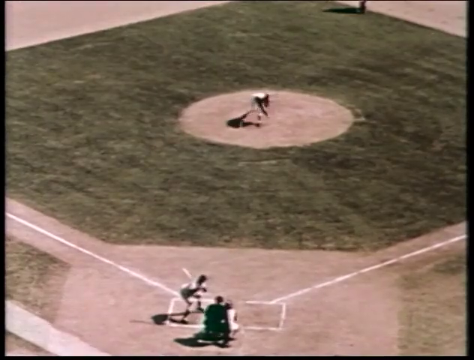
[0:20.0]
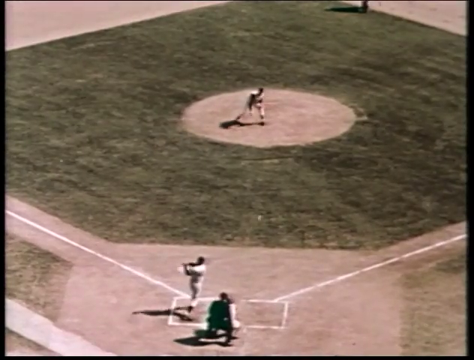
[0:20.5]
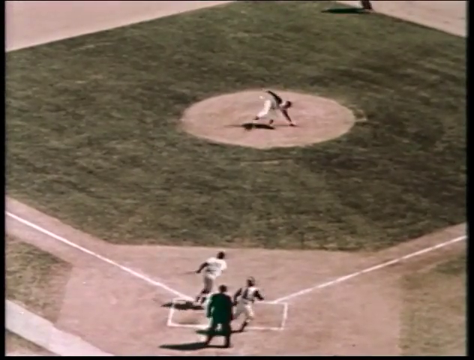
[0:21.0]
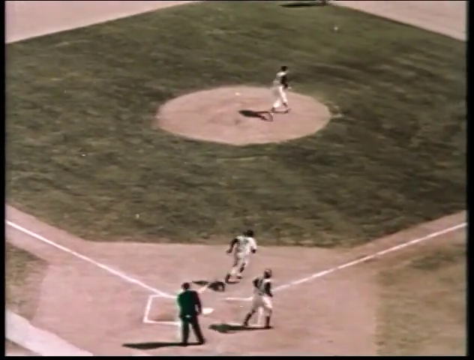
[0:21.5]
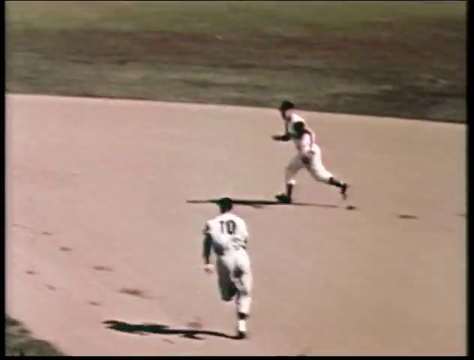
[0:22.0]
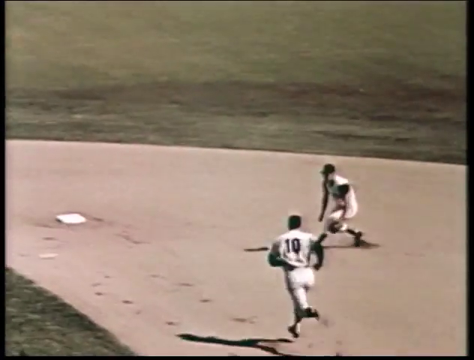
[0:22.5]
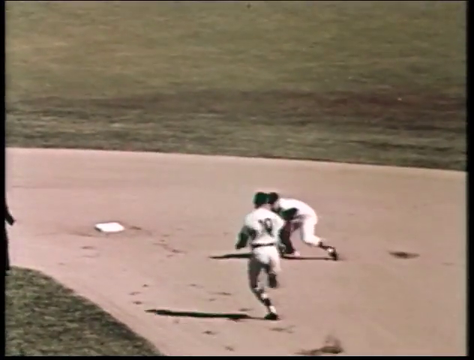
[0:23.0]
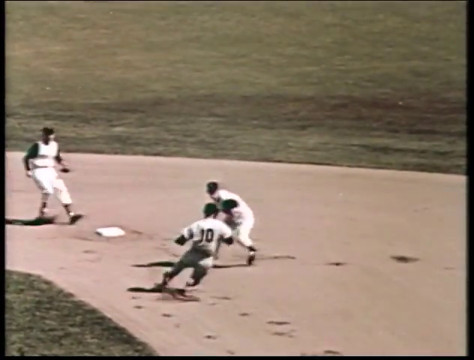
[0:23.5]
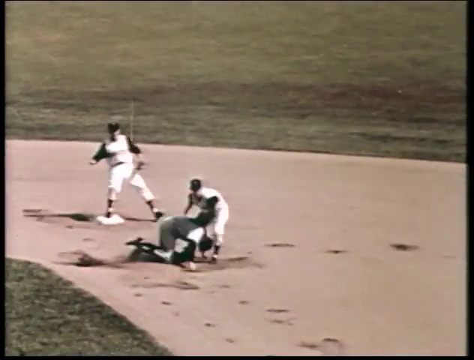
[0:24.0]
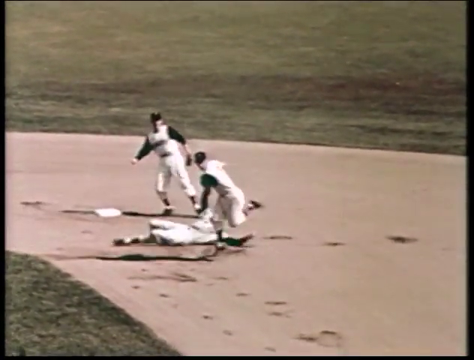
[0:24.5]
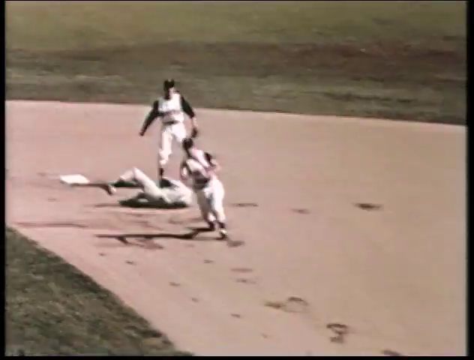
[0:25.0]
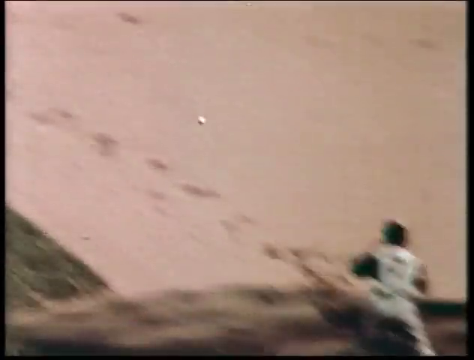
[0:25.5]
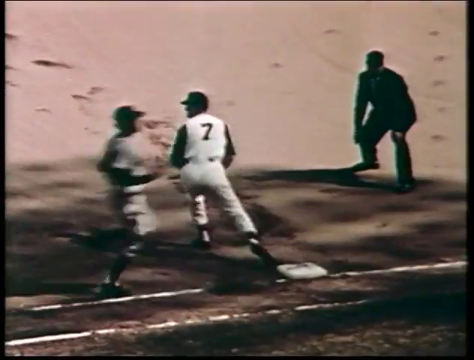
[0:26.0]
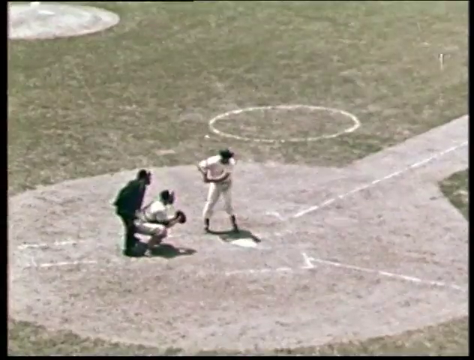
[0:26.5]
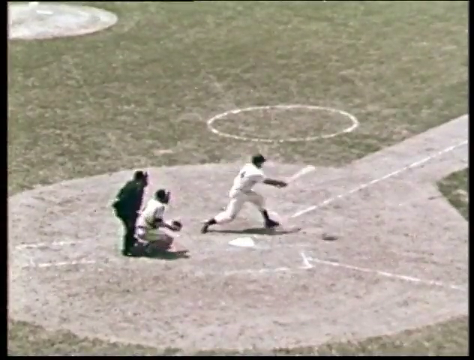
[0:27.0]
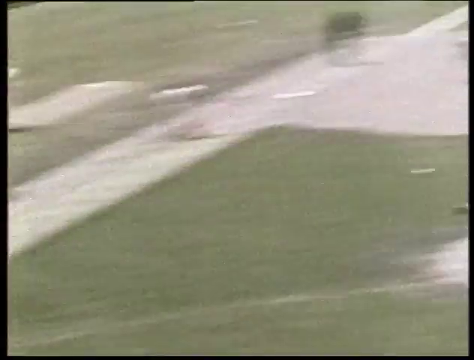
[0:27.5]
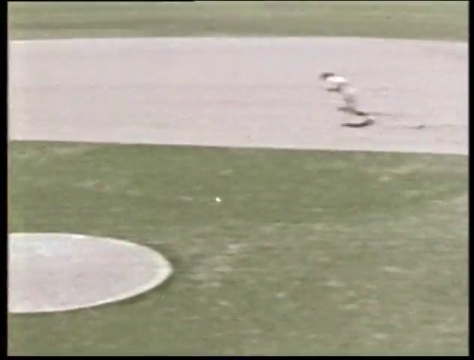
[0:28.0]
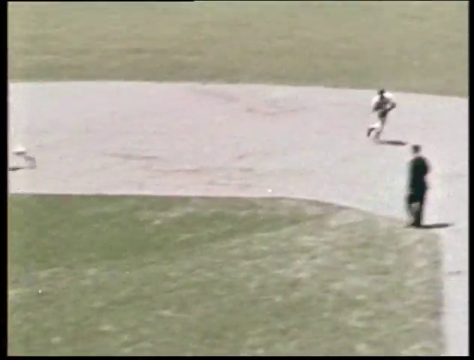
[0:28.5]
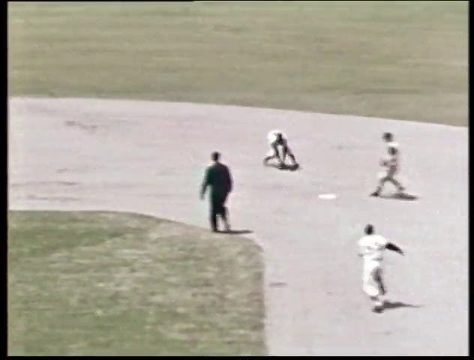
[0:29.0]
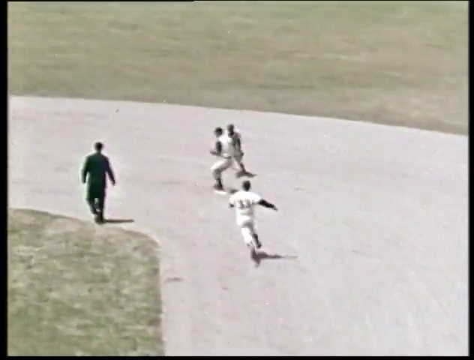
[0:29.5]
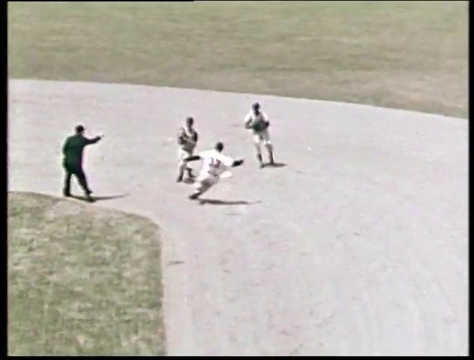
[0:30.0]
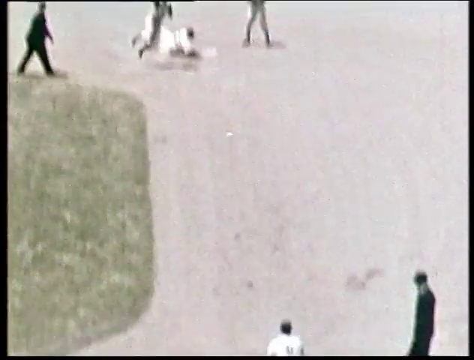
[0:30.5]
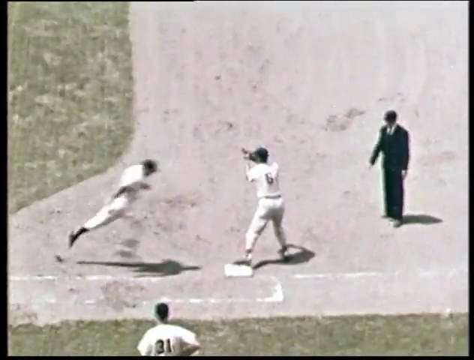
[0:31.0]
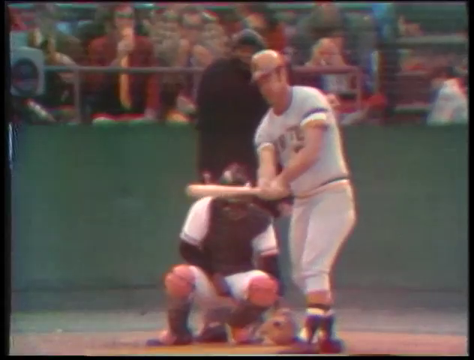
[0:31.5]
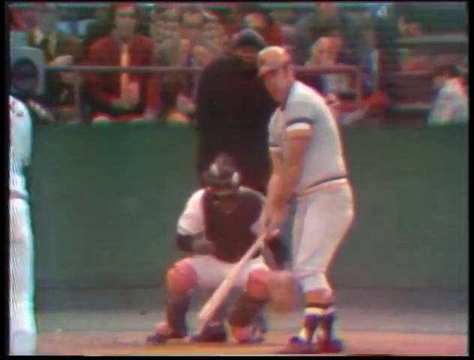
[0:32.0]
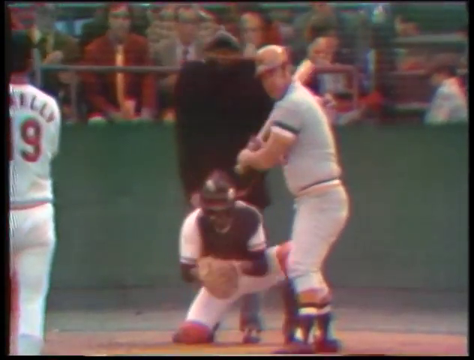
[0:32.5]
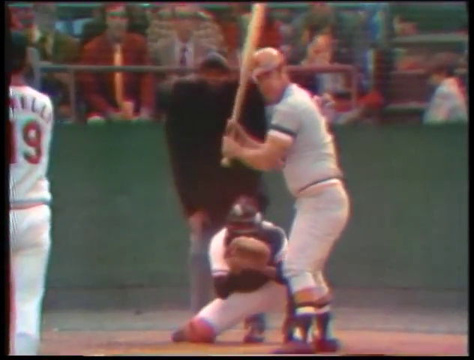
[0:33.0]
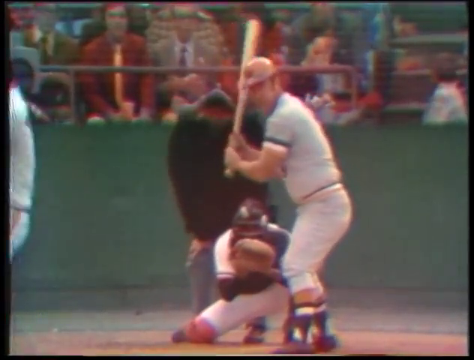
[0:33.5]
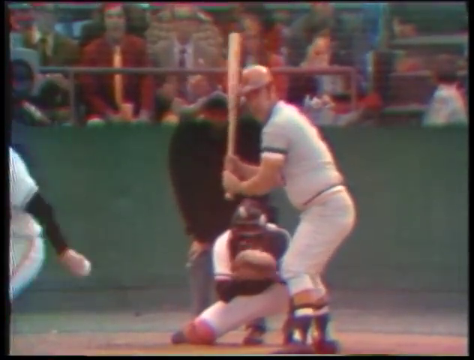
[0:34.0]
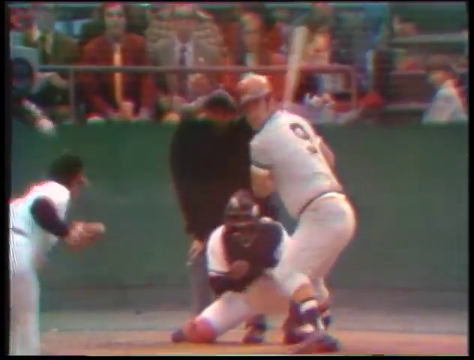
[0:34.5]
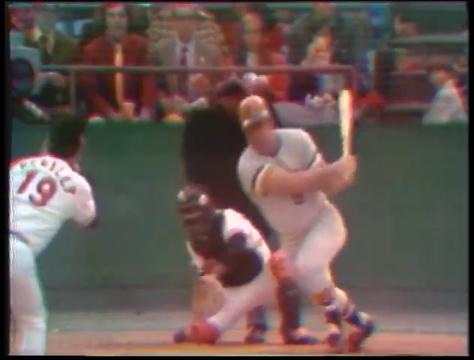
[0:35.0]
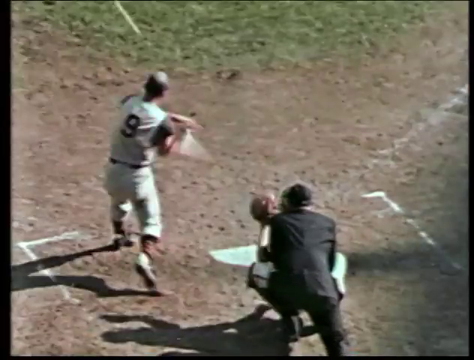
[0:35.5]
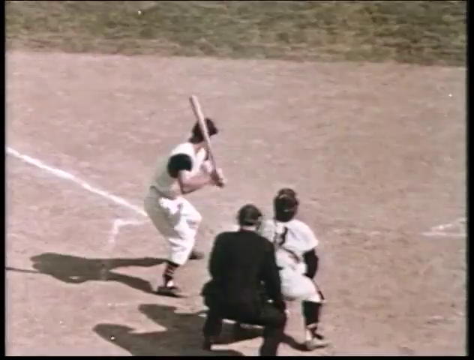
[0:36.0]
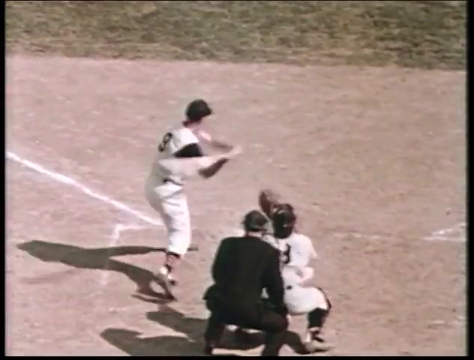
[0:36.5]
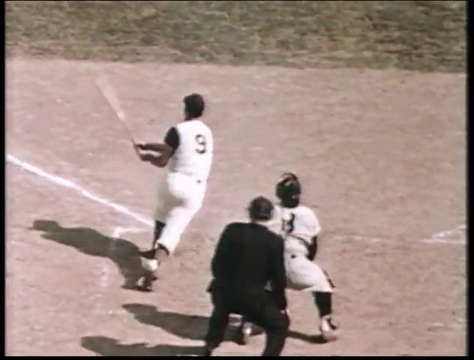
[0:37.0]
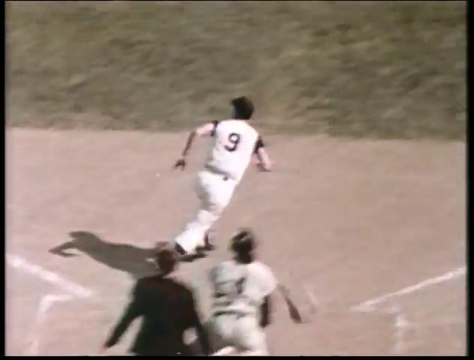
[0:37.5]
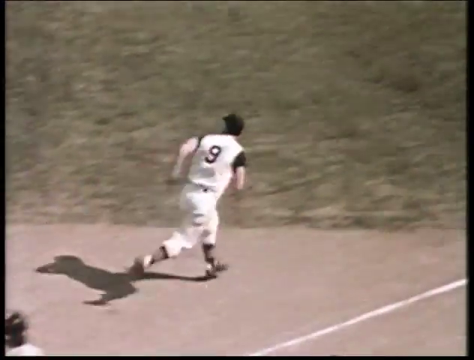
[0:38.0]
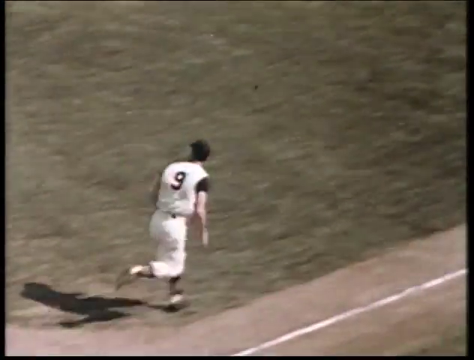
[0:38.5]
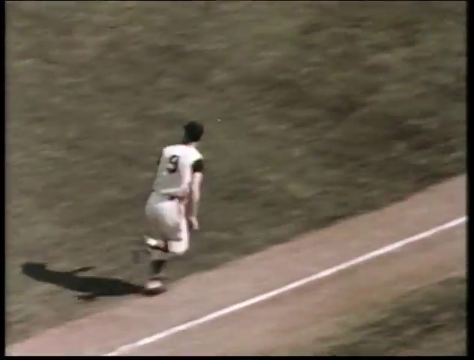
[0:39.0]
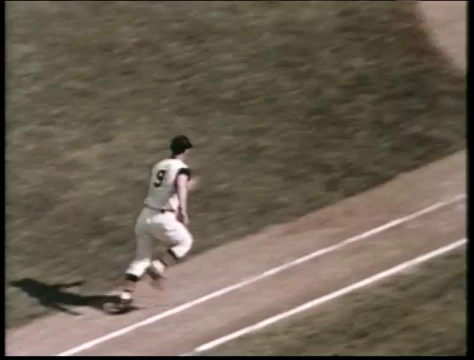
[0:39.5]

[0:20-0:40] A baseball diamond with a green field shows the pitcher throwing from a rounded mound to the batter at the plate, with a white square and a grey sandy spot. The backcatcher is crouched down below, and the umpire in black is just behind, calling balls and strikes. The batter hits the ball past the pitcher, and the man running toward second is tagged out. In a double play, the runner from first tries to slide into second but is called out by the umpire. A pitcher in white then throws to a batter in greyish colour, with a green wall behind, a backcatcher squatting down below, and the umpire wearing black protective gear. A man is sitting up in the stands, and the batter holds a brown bat. The pitcher throws the white ball and it is hit by the batter, number nine in white. As he runs toward first, it looks like he has smacked it out of the park for a home run.